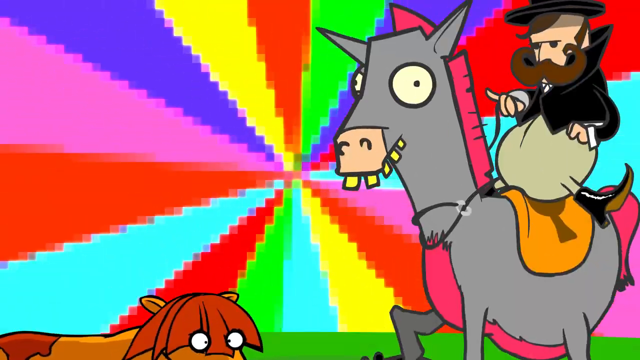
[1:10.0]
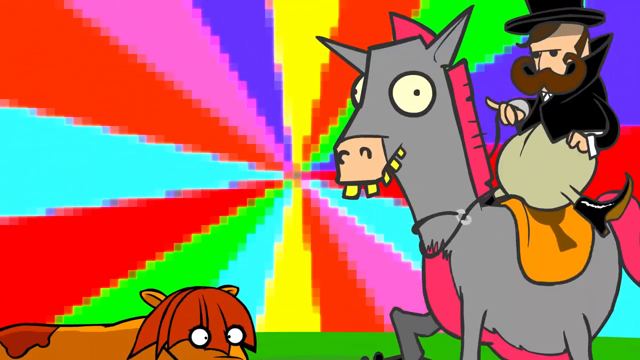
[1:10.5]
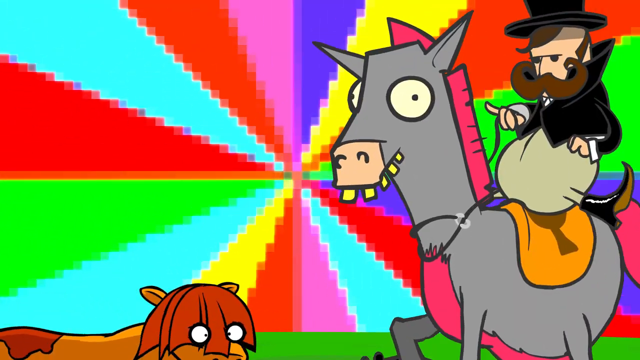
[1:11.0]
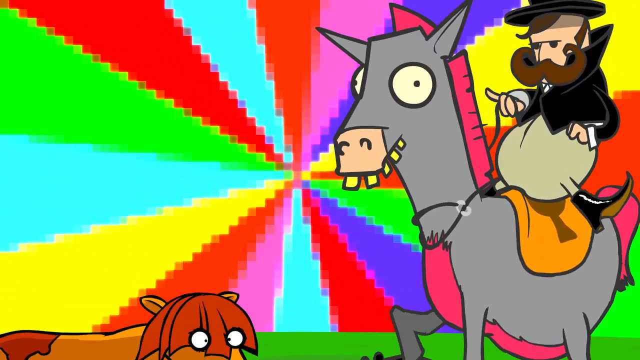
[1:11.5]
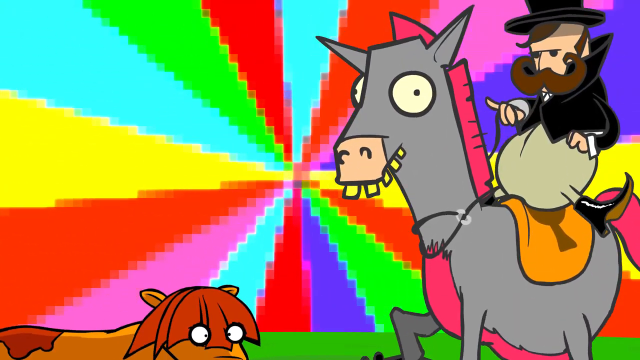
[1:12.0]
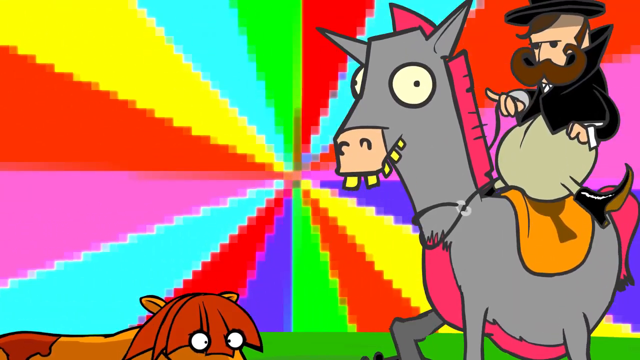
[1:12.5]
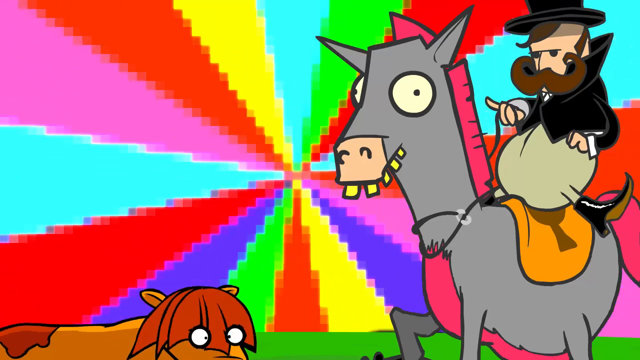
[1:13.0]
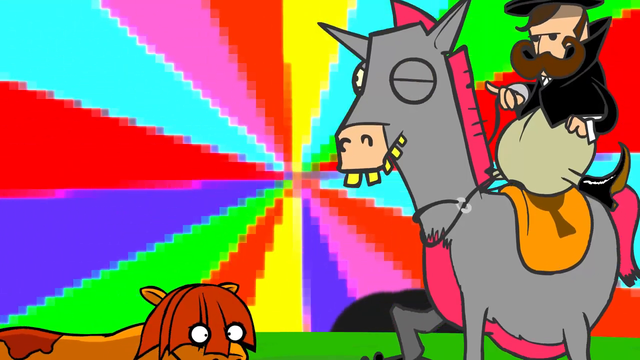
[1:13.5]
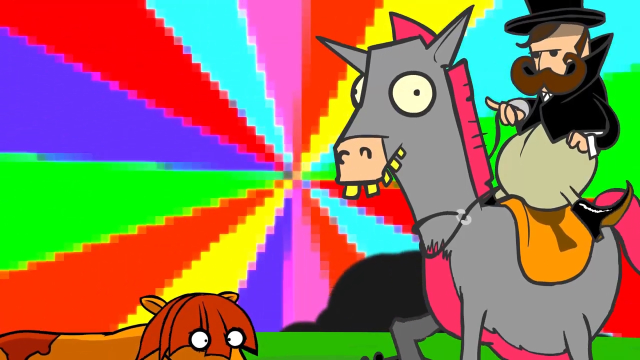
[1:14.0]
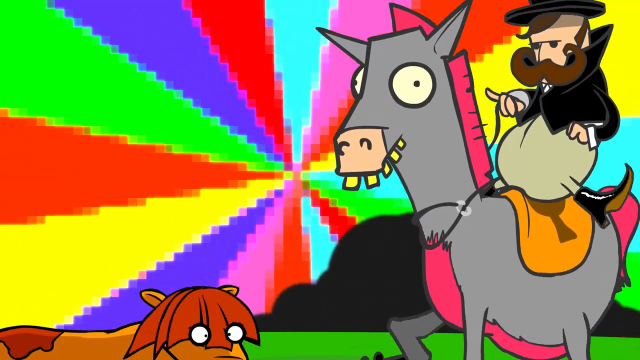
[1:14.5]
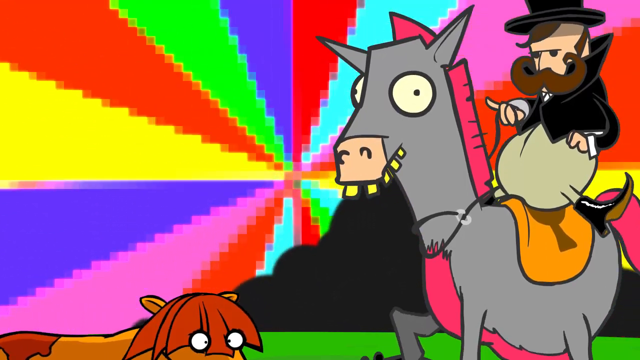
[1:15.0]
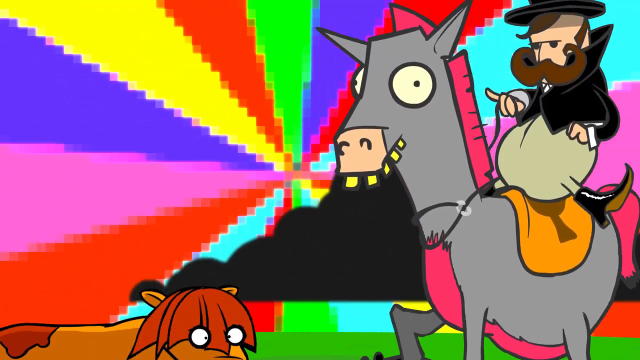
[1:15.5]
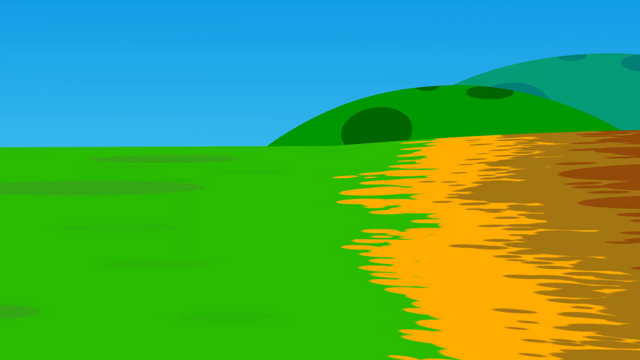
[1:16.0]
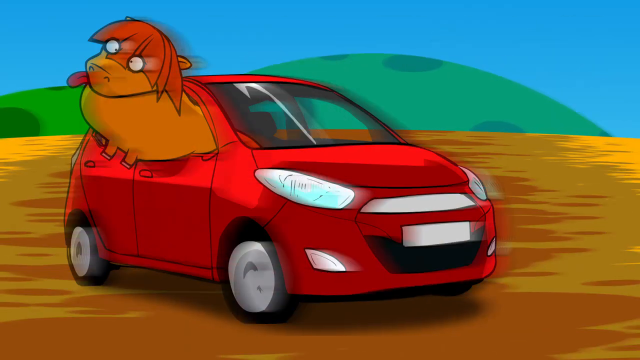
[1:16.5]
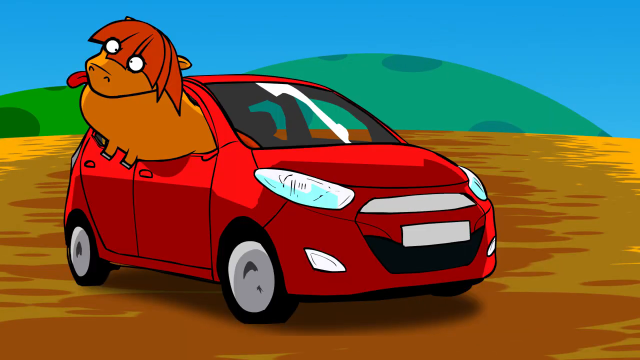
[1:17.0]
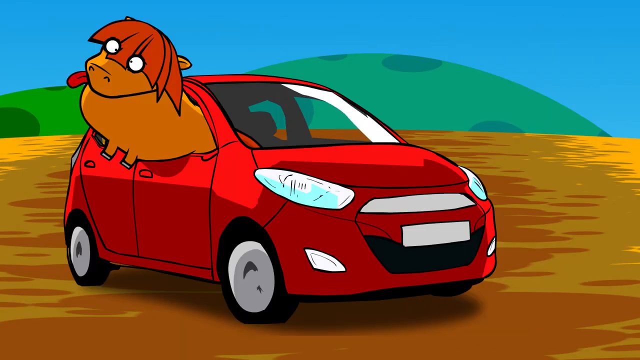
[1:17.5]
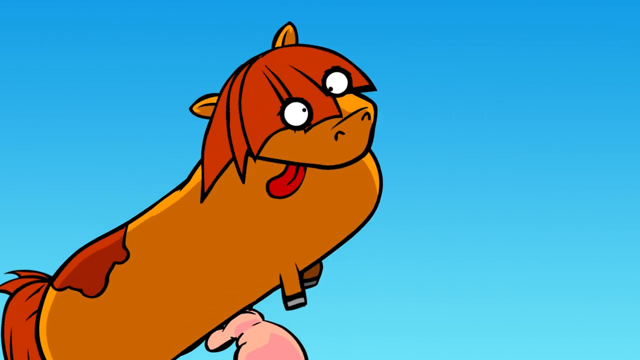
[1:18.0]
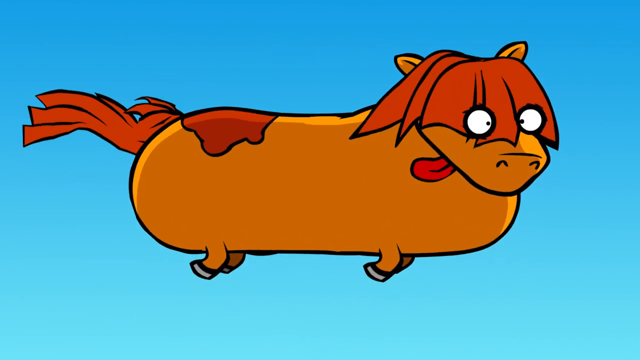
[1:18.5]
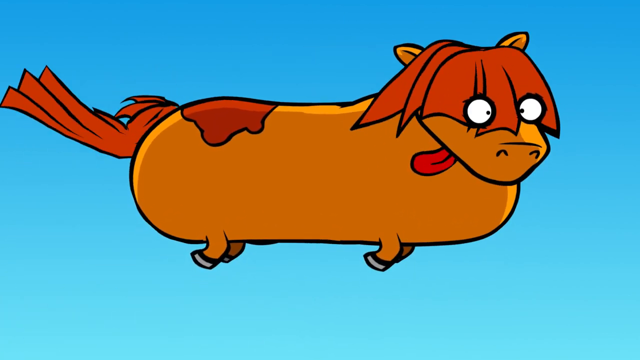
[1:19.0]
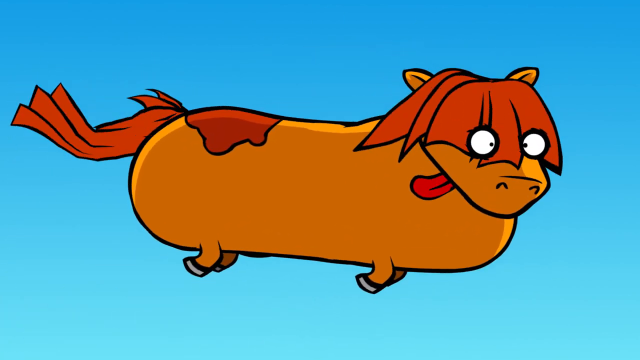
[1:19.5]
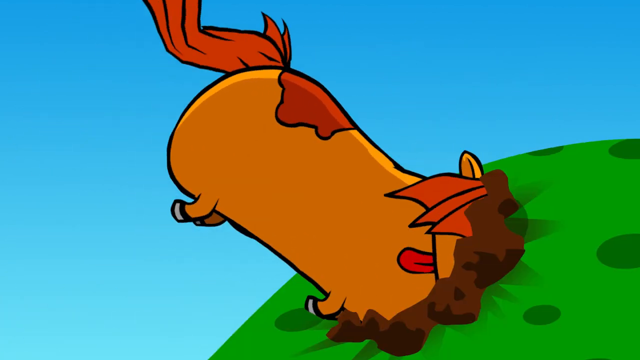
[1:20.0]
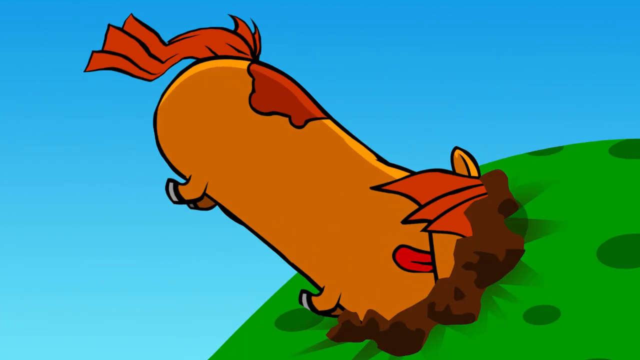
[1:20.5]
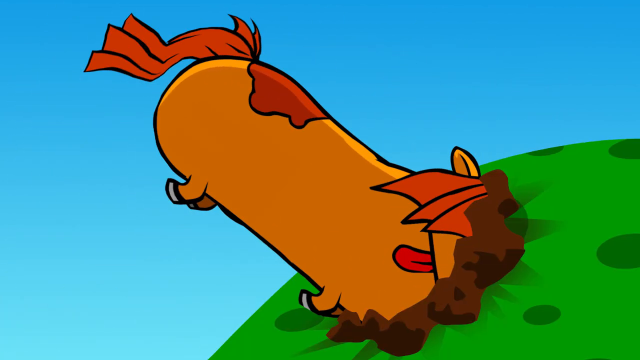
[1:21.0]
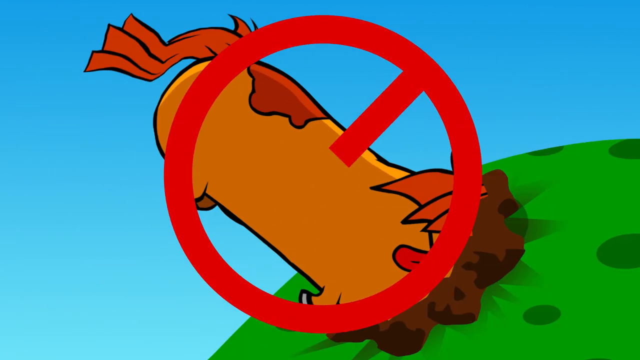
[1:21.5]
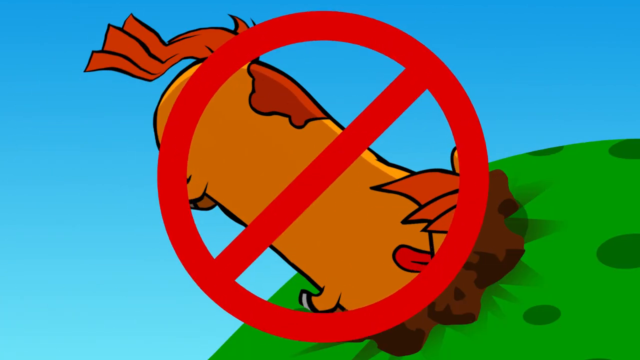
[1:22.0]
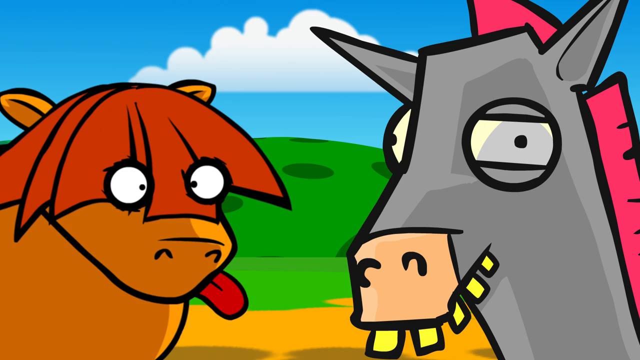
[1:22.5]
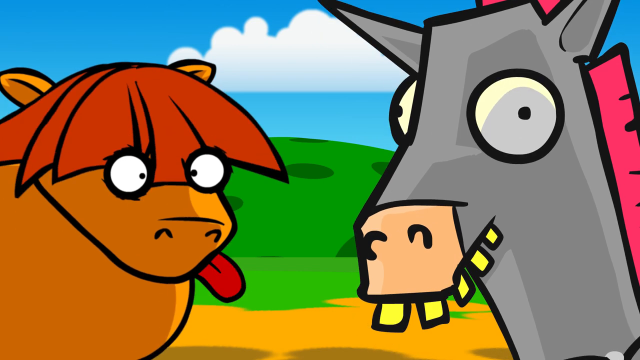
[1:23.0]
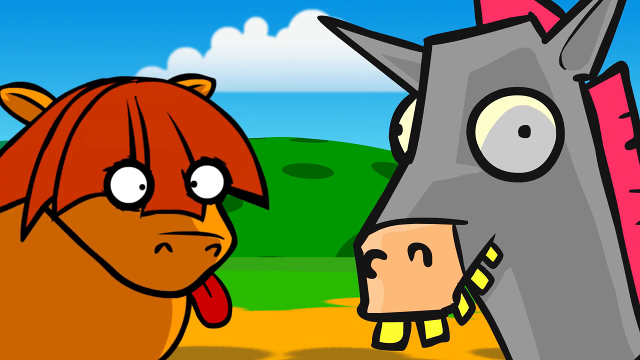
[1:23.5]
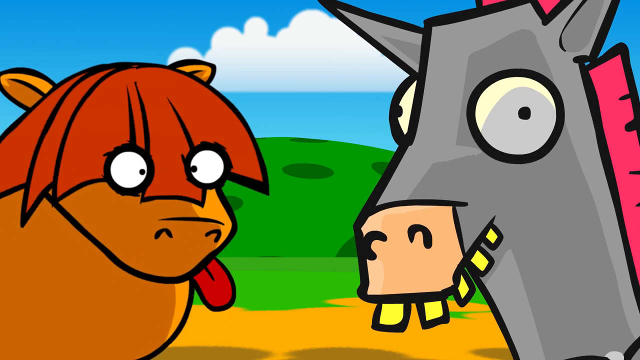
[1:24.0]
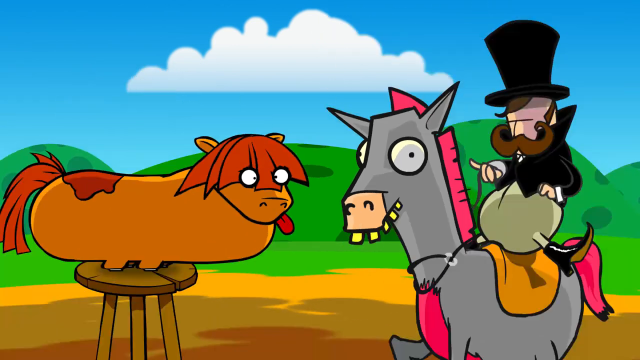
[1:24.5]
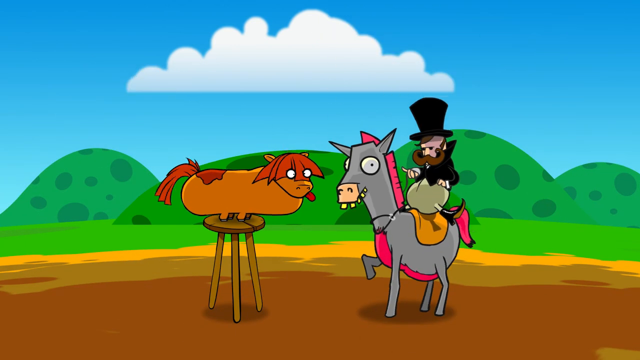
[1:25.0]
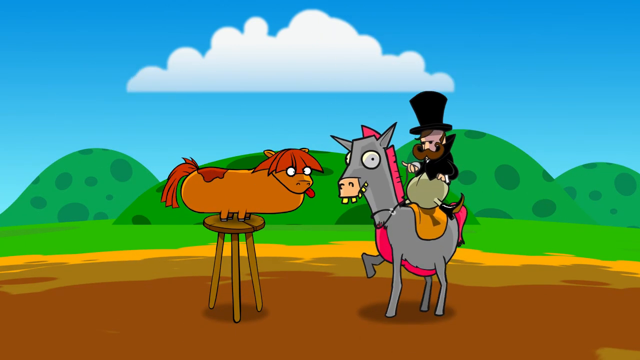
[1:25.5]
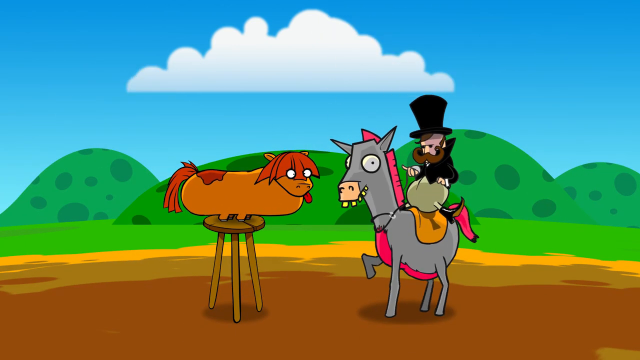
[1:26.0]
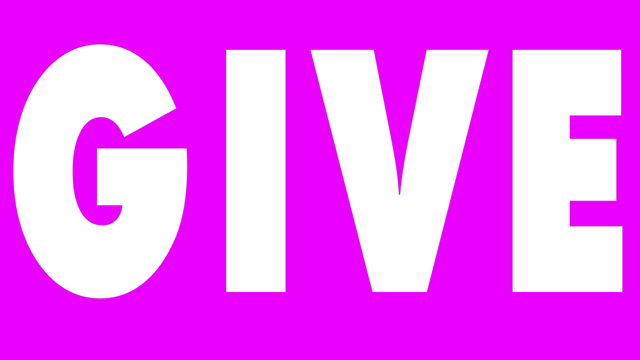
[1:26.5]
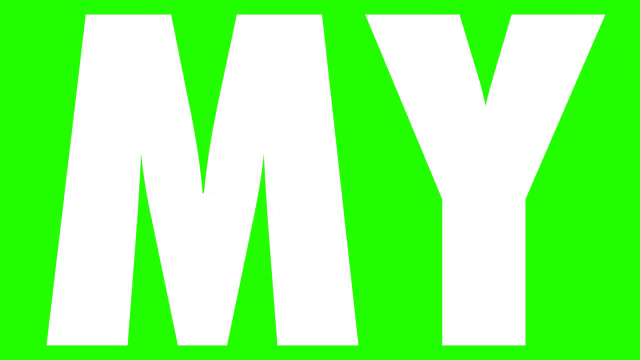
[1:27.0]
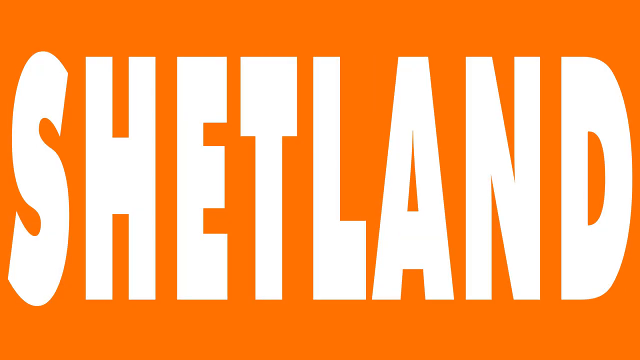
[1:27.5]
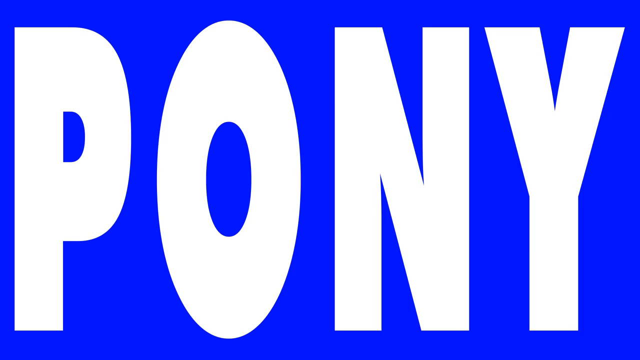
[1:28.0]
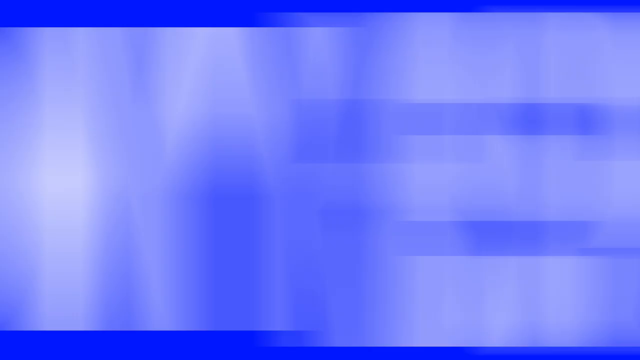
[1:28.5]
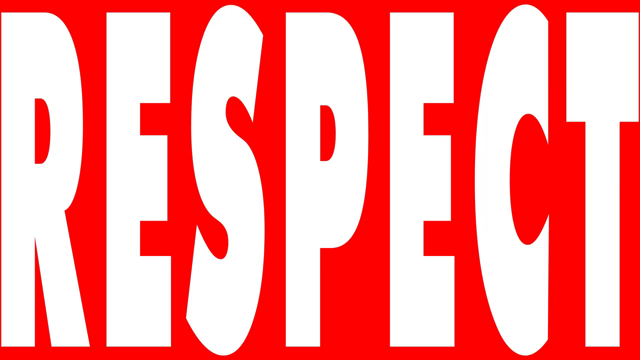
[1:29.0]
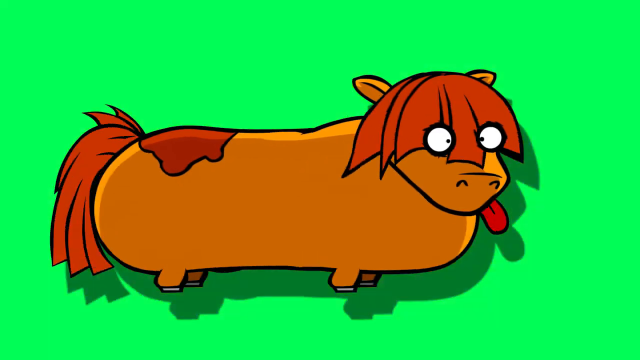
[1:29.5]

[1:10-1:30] The characters bounce up and down as the mixture of colours spins in the background. Next the horse is in a red car, a small hatchback facing right, parked in the desert with mountains and blue sky in the background. The cow peeks out of the right front window with the front of its body, its tongue out. There is a dog riding in a car. Then the cow is launched by what first looks like some kind of device but is the hand of the overweight kid, which throws the cow into the air; the cow flies fast to the right and crashes into the mountain, its head stuck in it. A no sign follows. Then the cow, the horse and the rider are shown again bouncing up and down, with the cow on top of a three-legged wooden chair. Text appears: "give me my Shetland pony, respect". After that the cow is in a different background, still dancing.